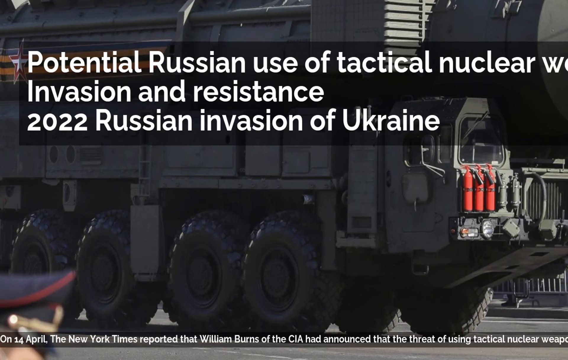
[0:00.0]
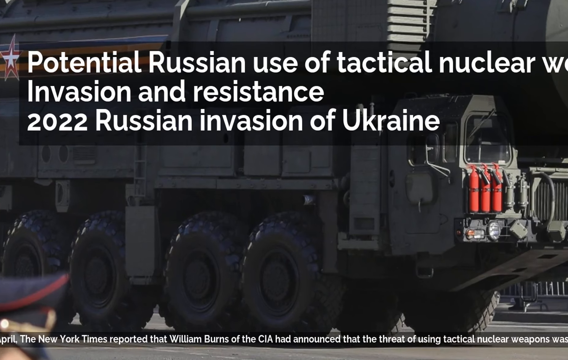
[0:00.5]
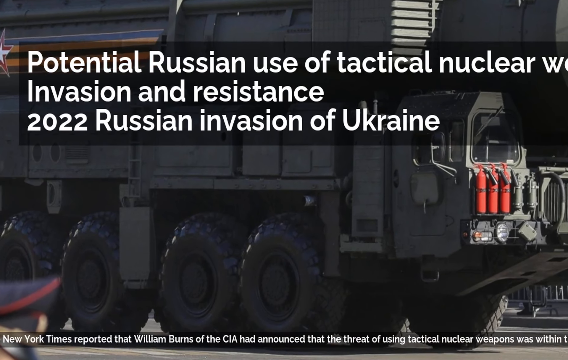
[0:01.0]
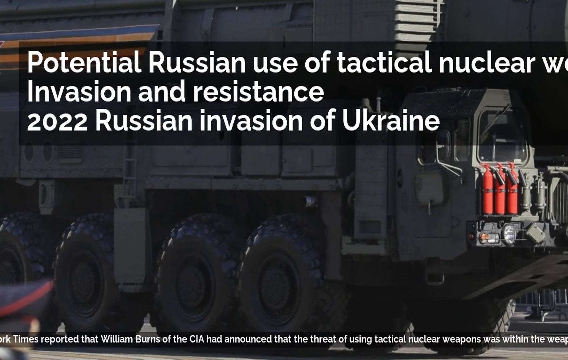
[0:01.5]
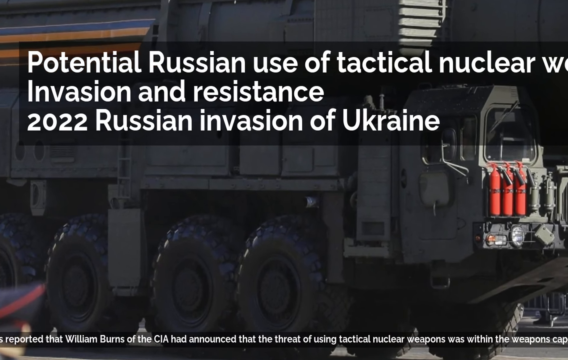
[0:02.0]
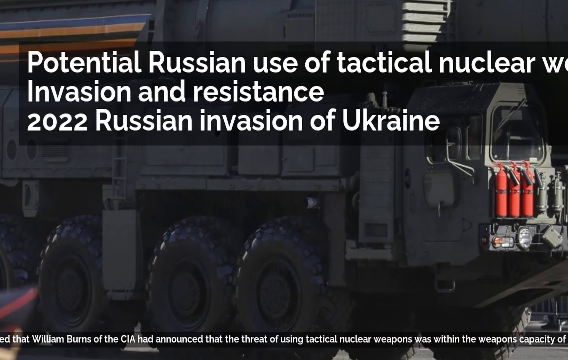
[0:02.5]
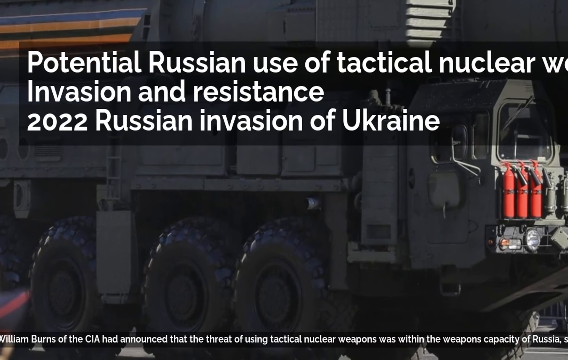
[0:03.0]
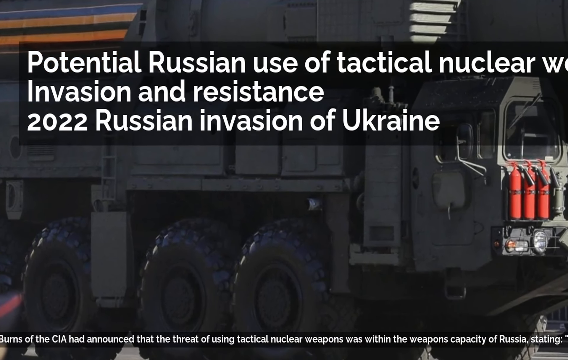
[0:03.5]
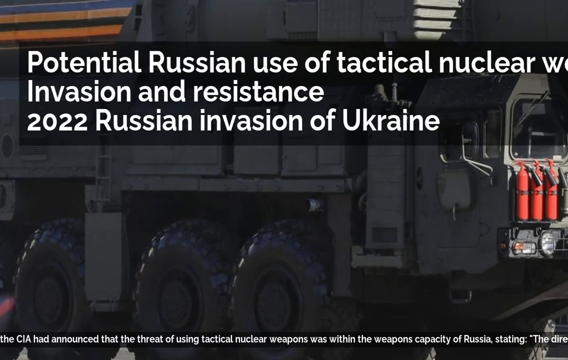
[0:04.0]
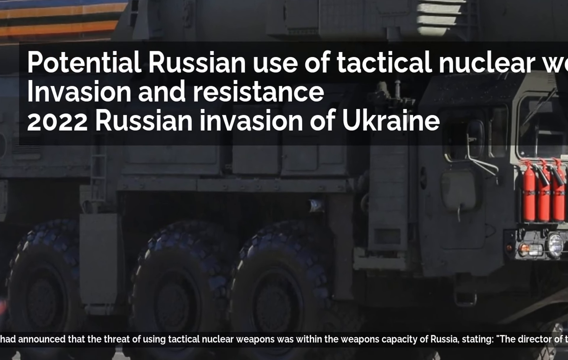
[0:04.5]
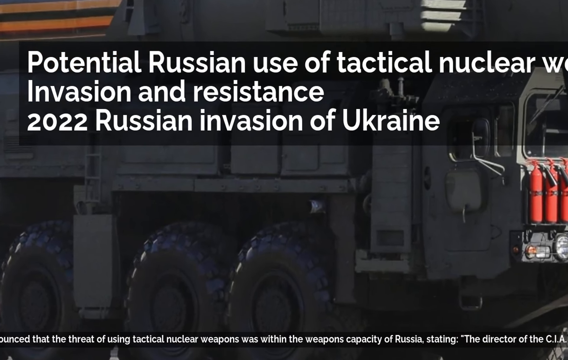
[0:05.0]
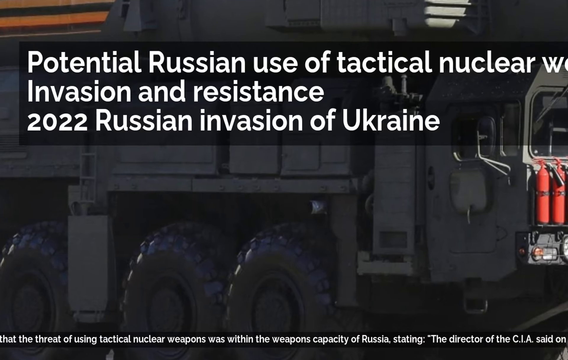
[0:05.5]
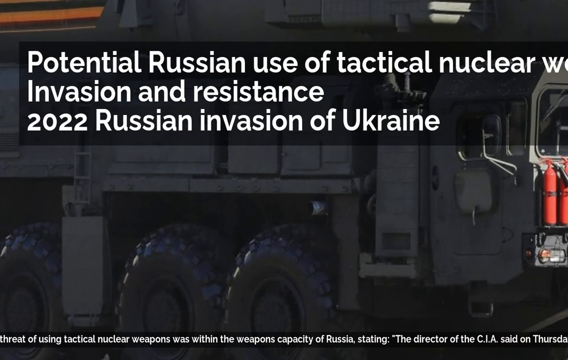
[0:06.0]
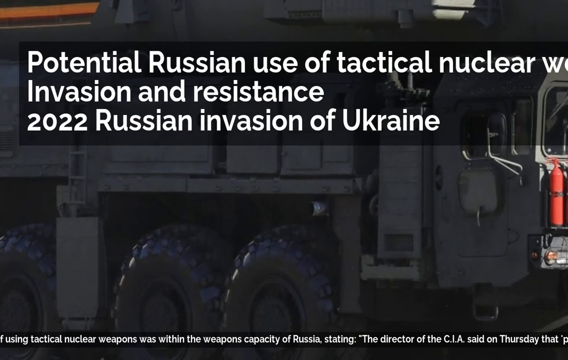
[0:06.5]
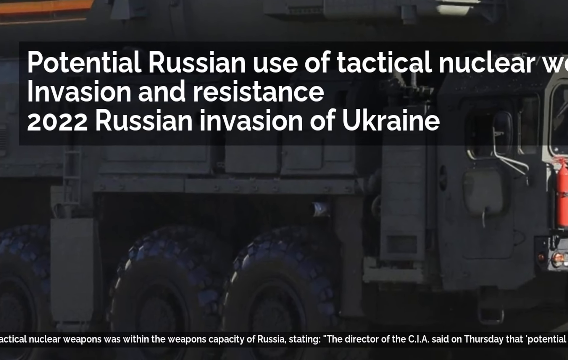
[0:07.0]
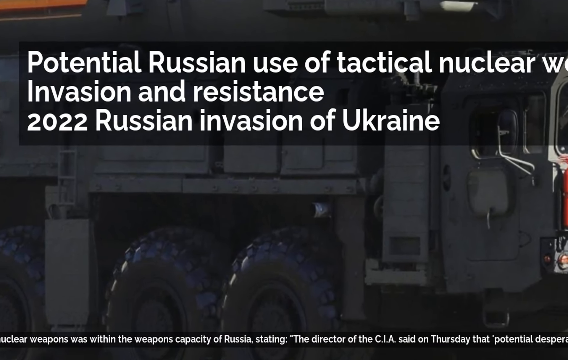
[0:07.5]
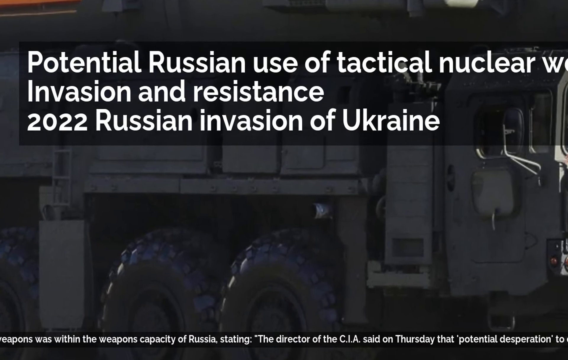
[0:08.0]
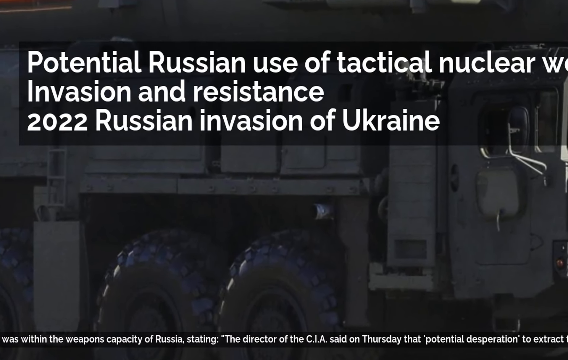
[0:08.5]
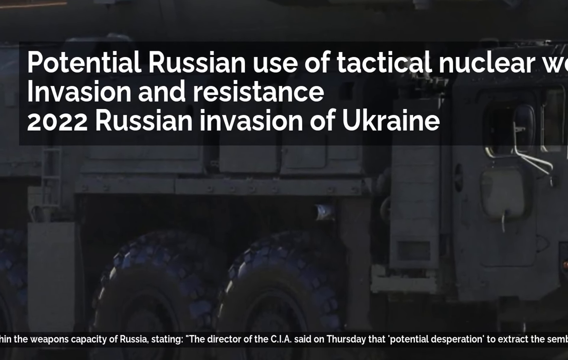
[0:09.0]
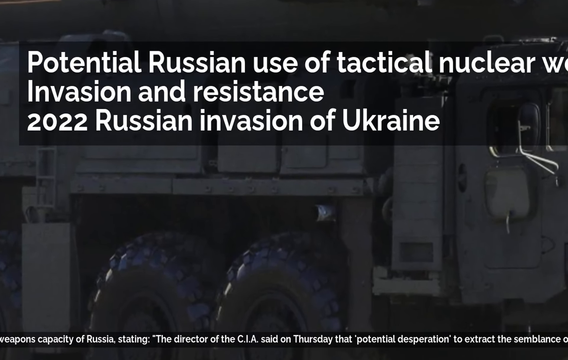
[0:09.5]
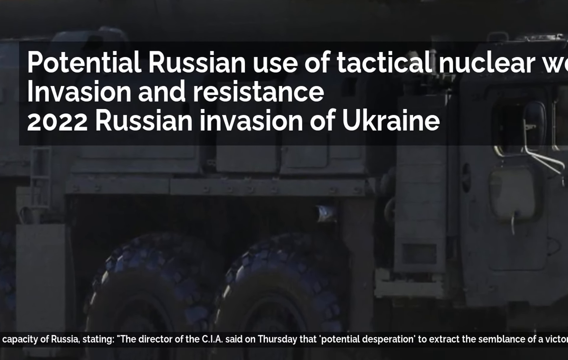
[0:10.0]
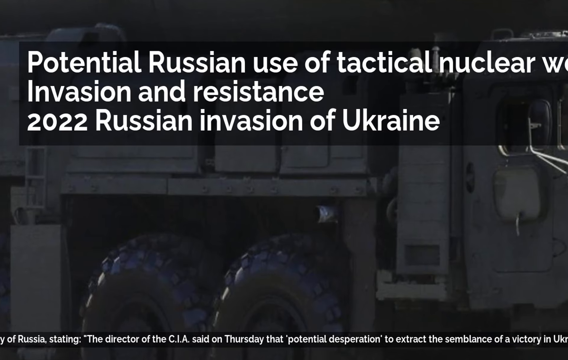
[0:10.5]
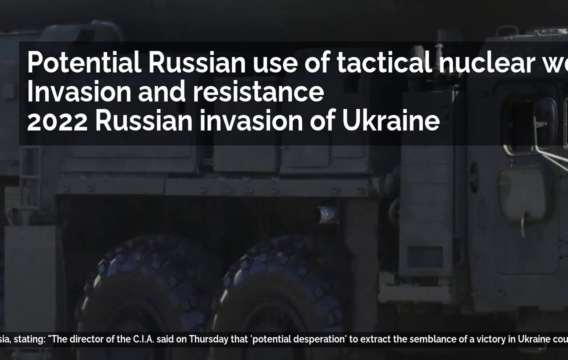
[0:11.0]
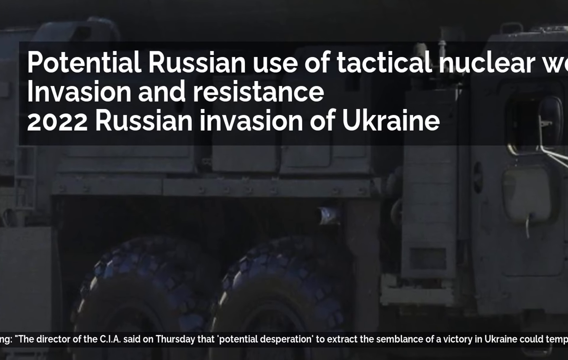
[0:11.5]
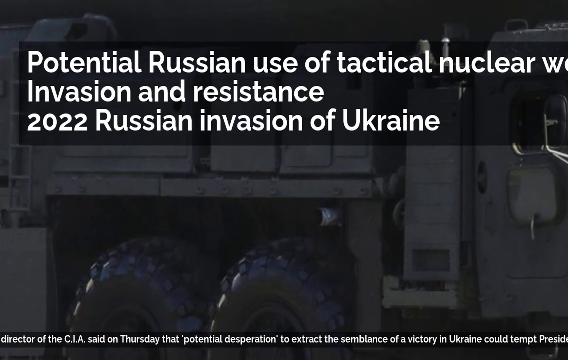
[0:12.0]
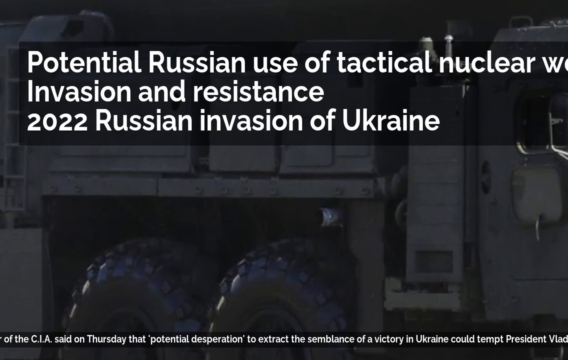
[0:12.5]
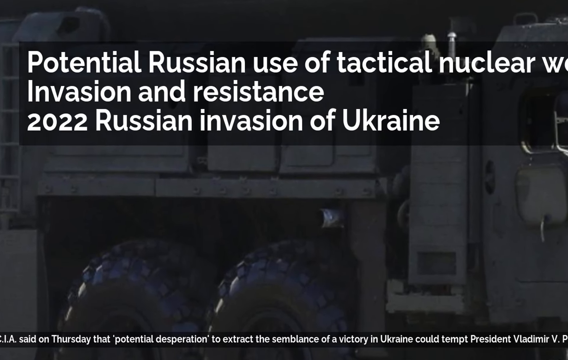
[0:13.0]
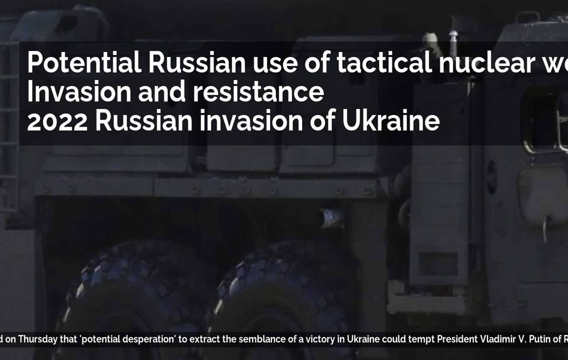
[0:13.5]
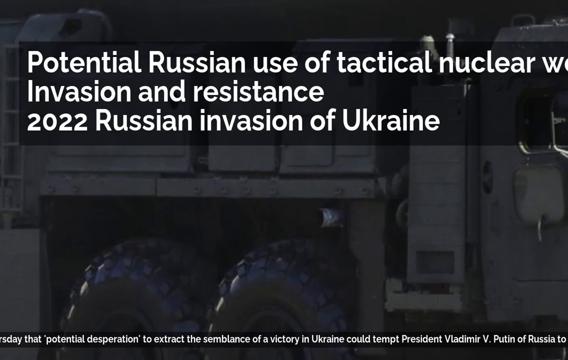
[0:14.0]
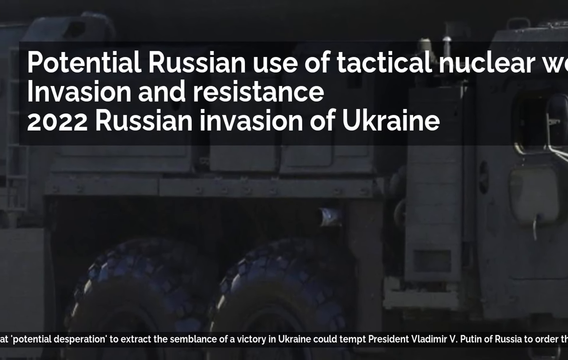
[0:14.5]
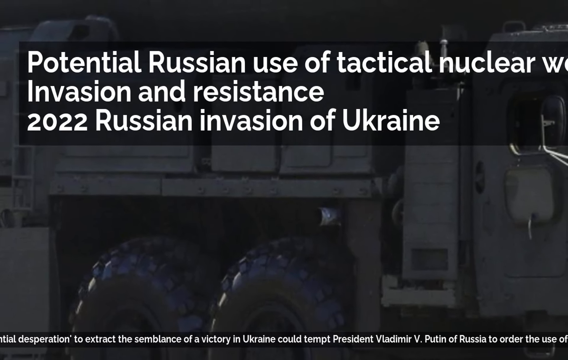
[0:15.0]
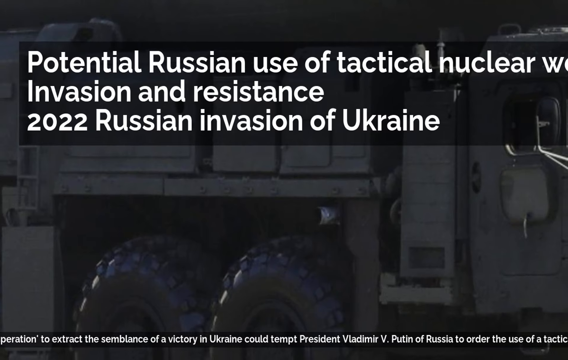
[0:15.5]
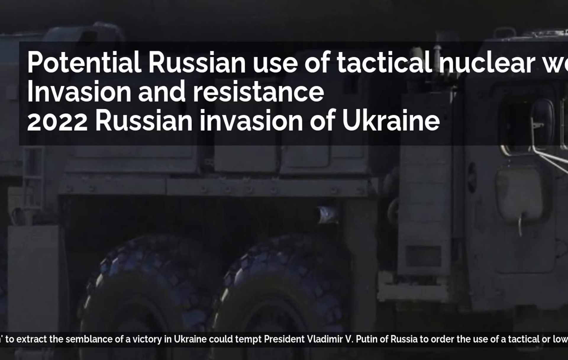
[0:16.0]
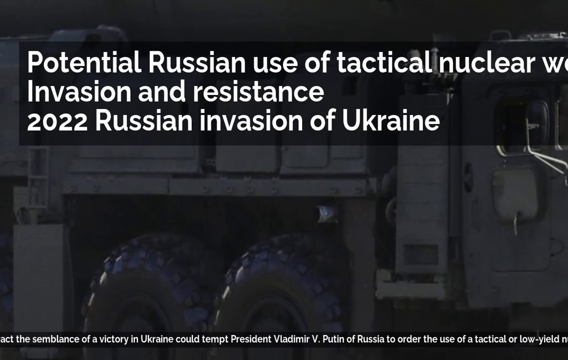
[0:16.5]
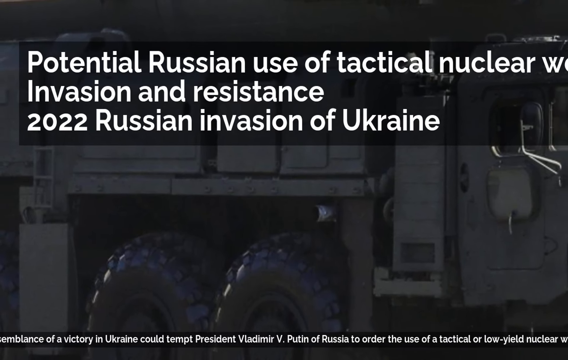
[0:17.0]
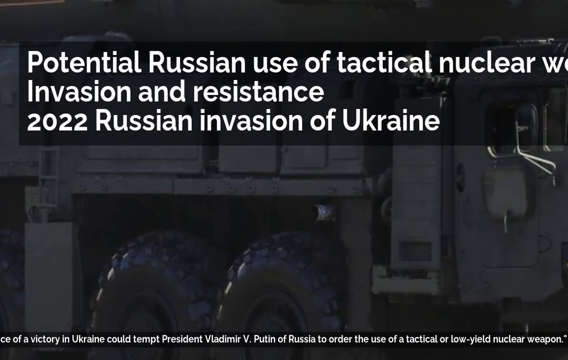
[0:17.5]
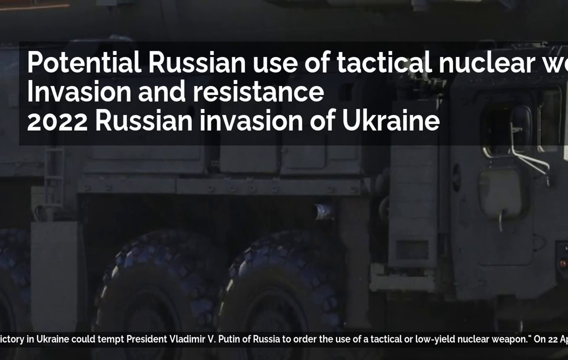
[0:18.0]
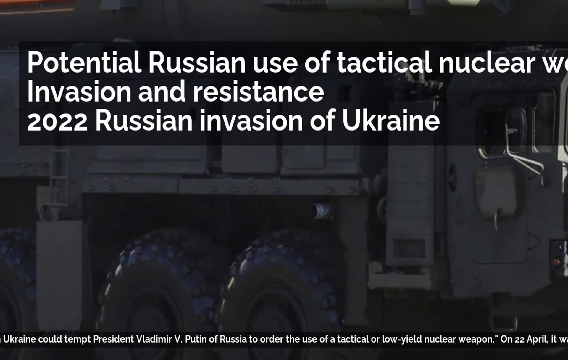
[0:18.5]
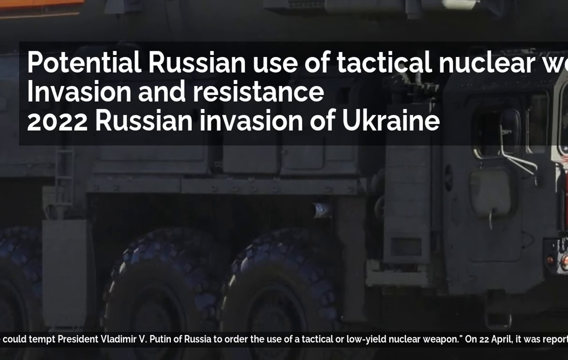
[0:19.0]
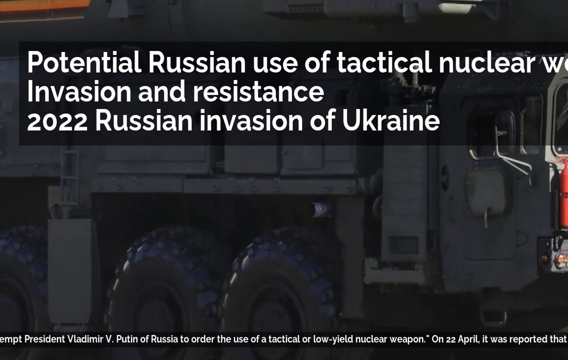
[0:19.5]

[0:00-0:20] What appears to be some kind of Russian military vehicle is shown. It is heavy-duty or armored, presumably bomb-resistant, and looks like it could have eight or ten wheels. It sits very high off the ground with high clearance. At the front is a cab that also looks secured and bombproof. On the front of the cab are three red fire extinguishers and two other silver canisters. A heading reads "potential Russian use of tactical nuclear weapons and the invasion and resistance 2022 Russian invasion of Ukraine." Along the bottom of the picture, a running ribbon of text reads "on April the 14th New York Times reported that William Burns of the CIA had announced that the threat of using tactical nuclear weapons was within the weapons capacity of Russia, stating that the director of the CIA said on Tuesday that potential desperation to extract the semblance of a victory in Ukraine could tempt President Vladimir V Putin of Russia to order the use of a tactical or low-yield nuclear weapon. On the 22nd of April it was reported that Russia."